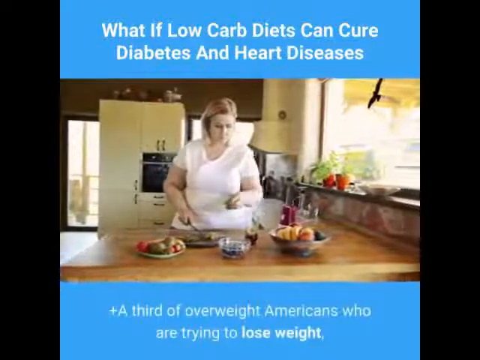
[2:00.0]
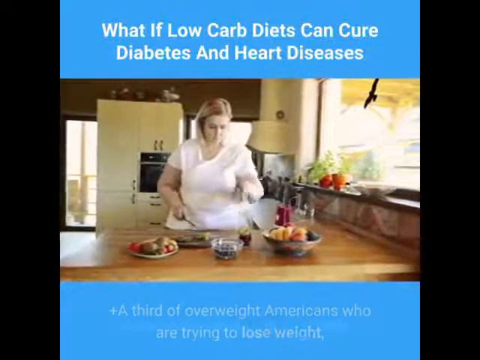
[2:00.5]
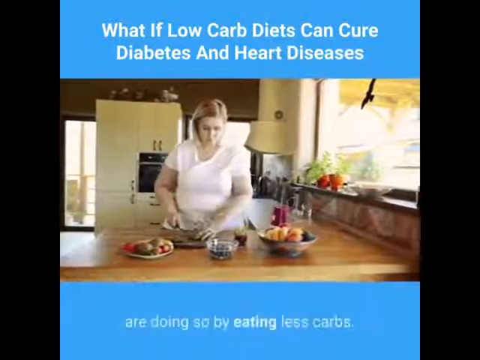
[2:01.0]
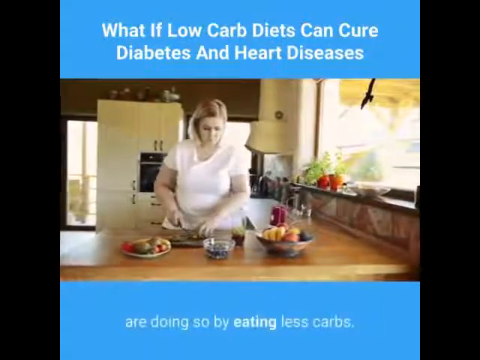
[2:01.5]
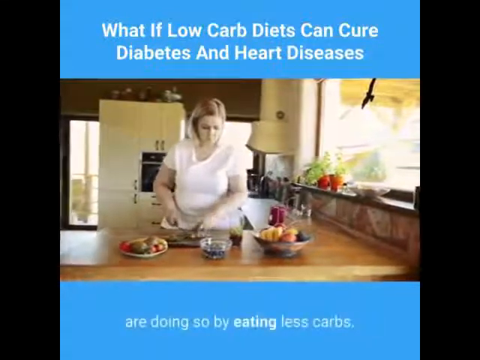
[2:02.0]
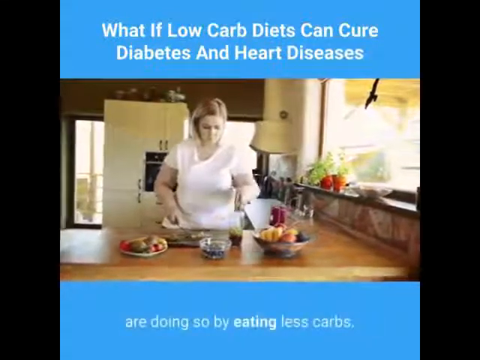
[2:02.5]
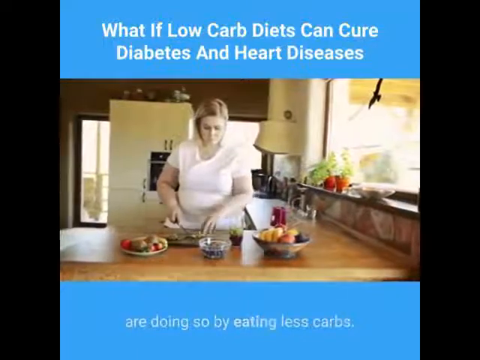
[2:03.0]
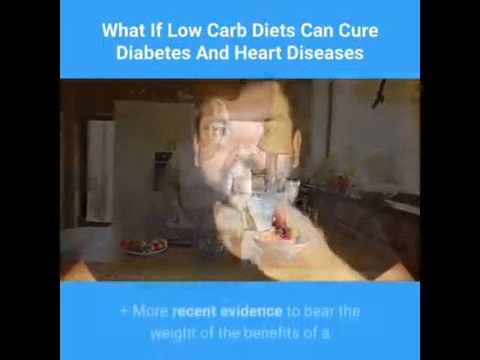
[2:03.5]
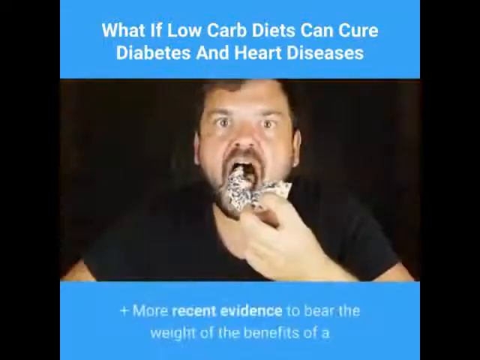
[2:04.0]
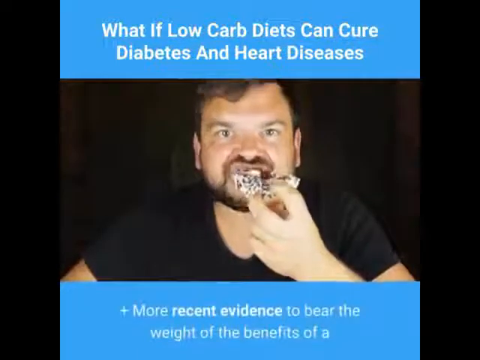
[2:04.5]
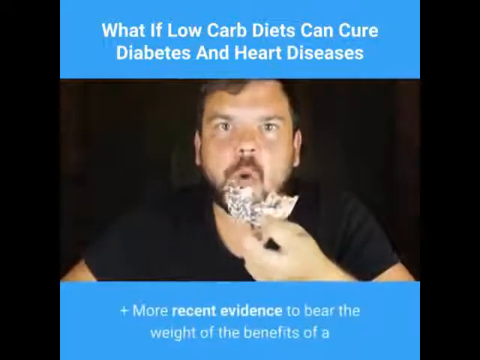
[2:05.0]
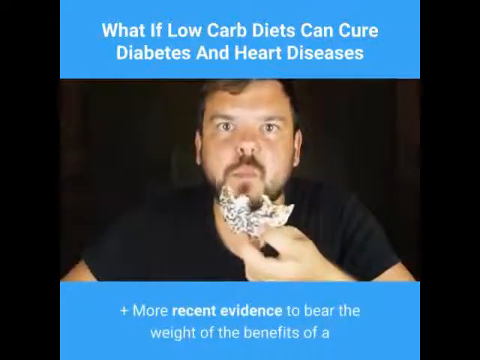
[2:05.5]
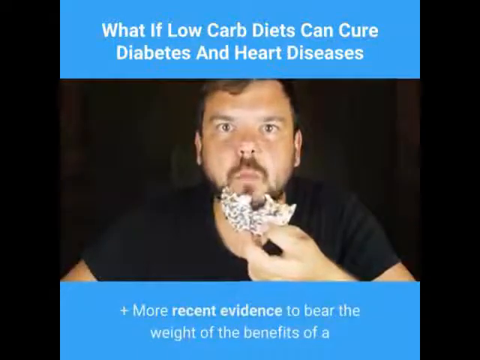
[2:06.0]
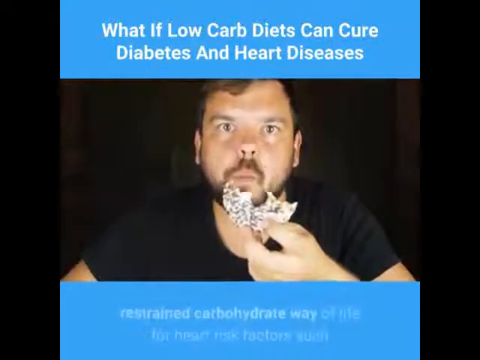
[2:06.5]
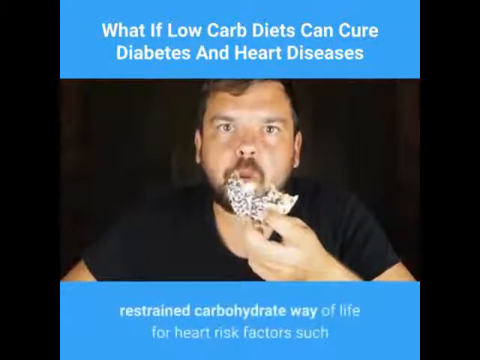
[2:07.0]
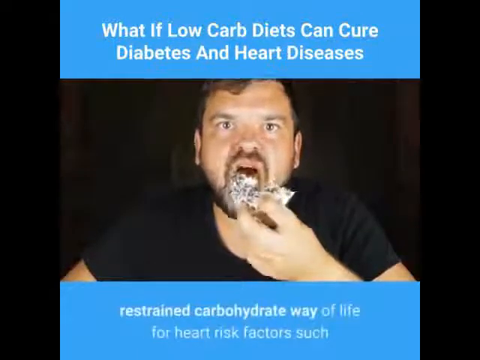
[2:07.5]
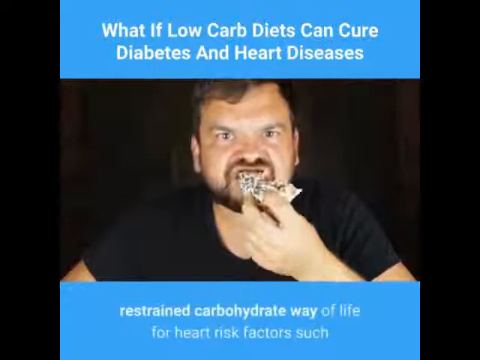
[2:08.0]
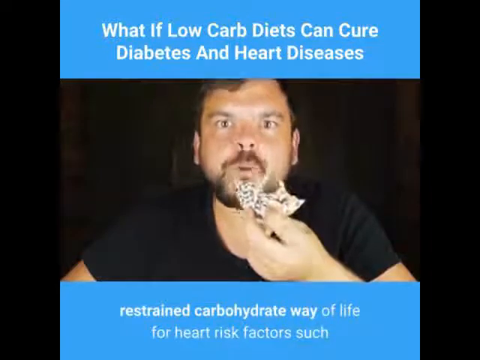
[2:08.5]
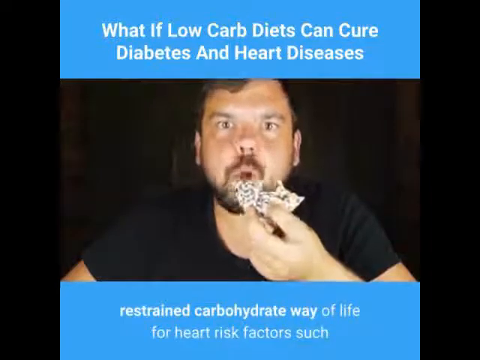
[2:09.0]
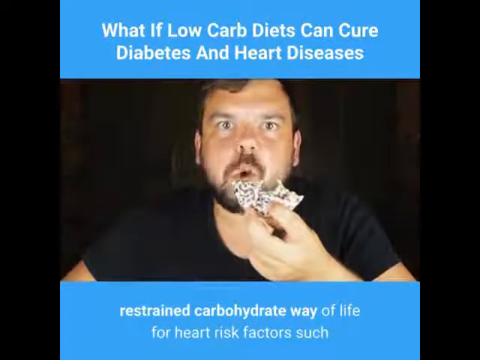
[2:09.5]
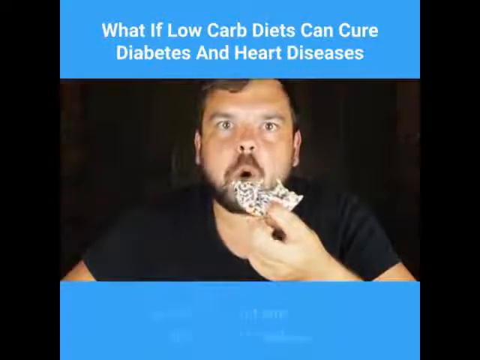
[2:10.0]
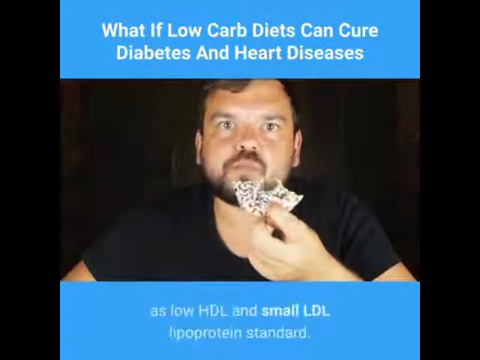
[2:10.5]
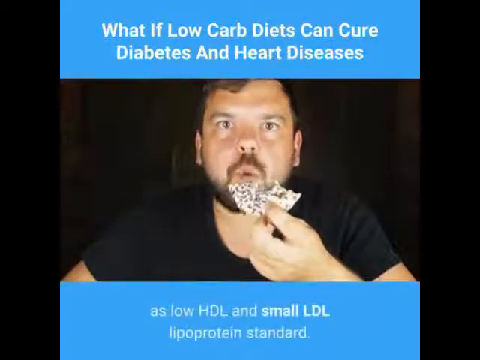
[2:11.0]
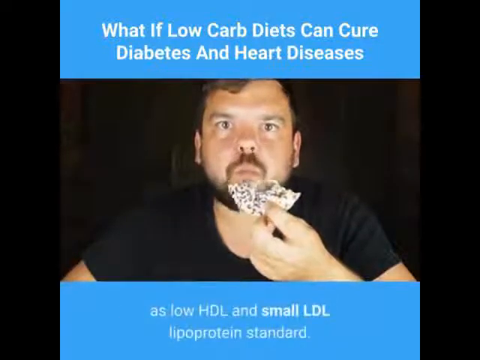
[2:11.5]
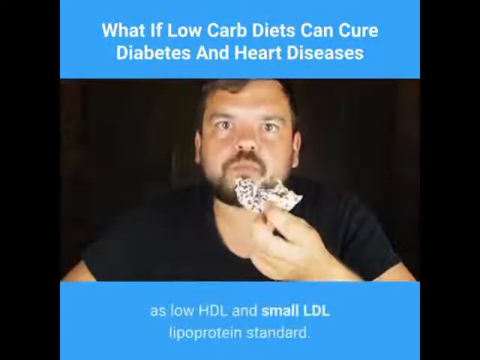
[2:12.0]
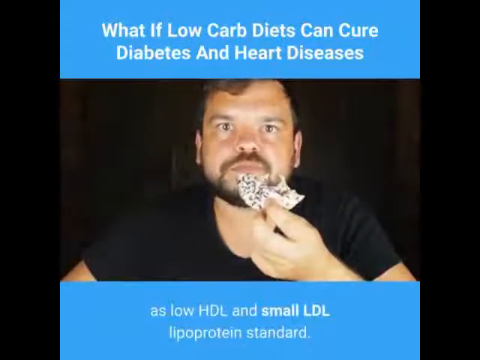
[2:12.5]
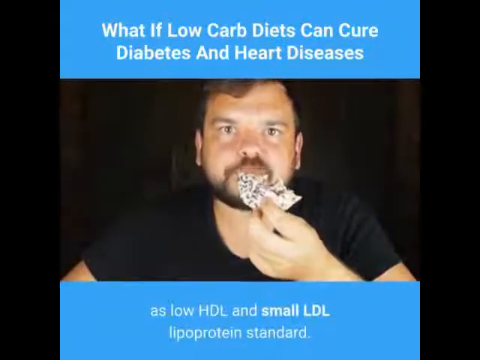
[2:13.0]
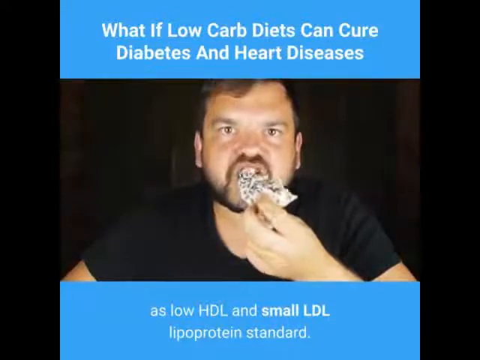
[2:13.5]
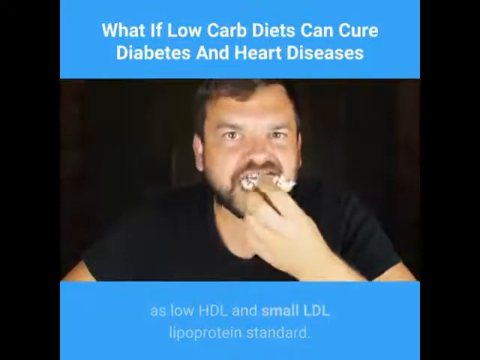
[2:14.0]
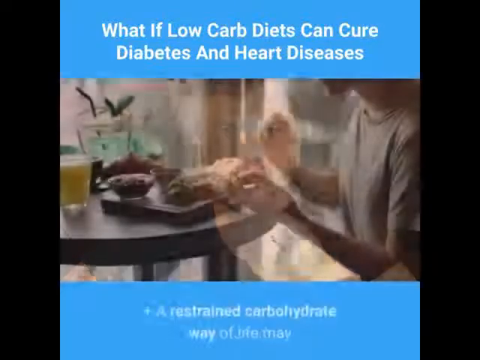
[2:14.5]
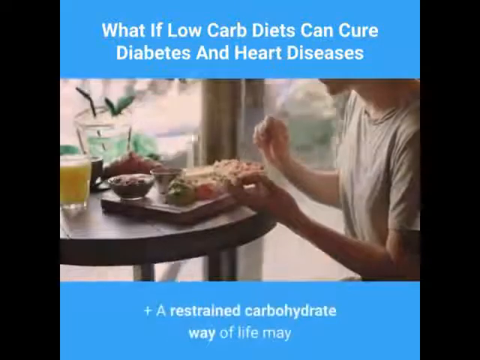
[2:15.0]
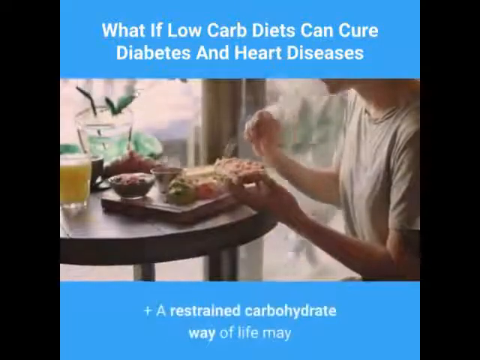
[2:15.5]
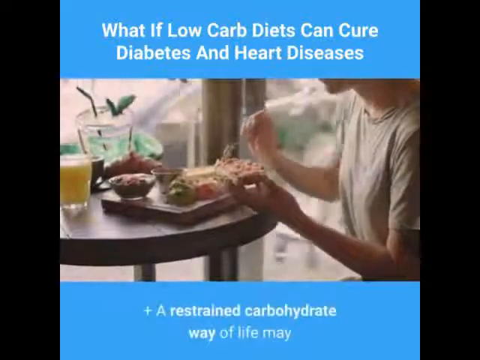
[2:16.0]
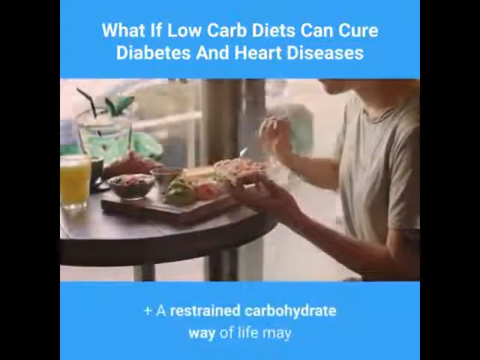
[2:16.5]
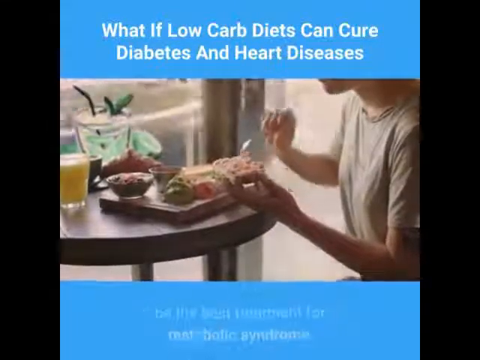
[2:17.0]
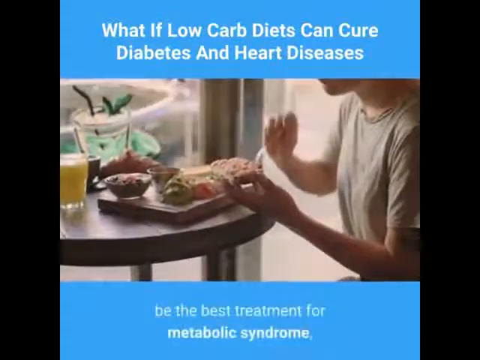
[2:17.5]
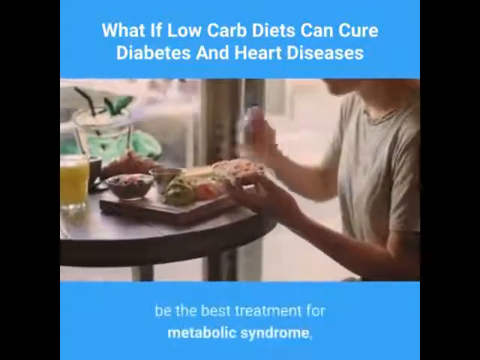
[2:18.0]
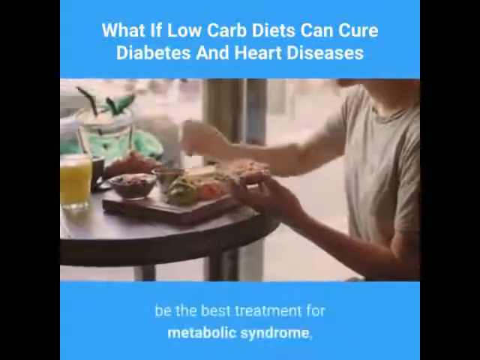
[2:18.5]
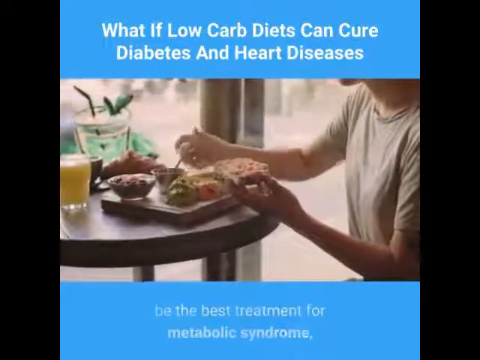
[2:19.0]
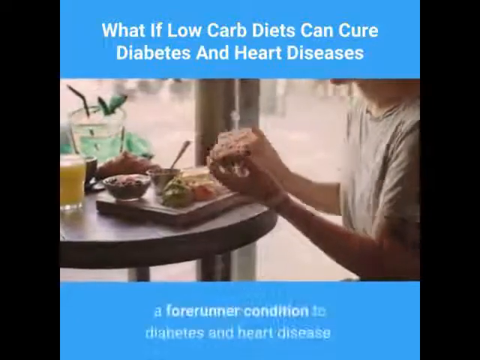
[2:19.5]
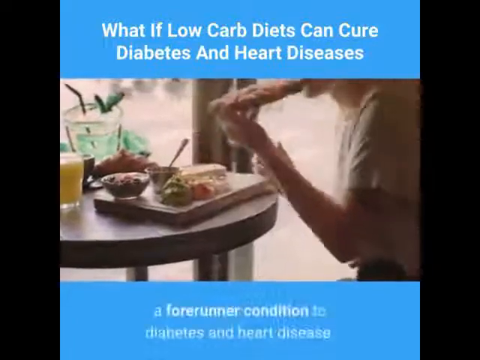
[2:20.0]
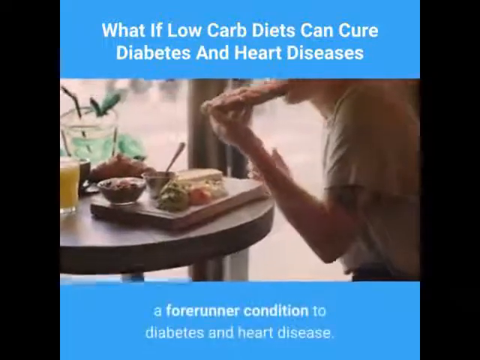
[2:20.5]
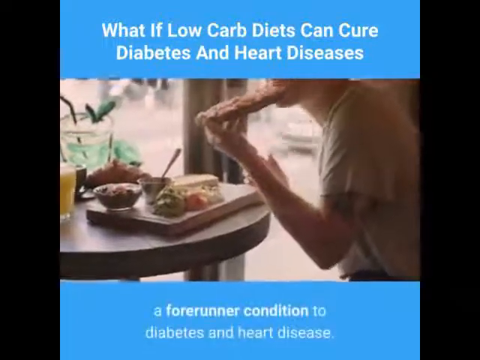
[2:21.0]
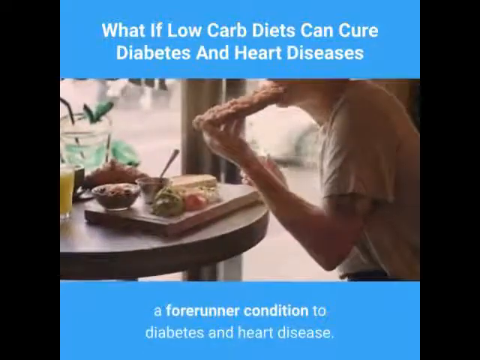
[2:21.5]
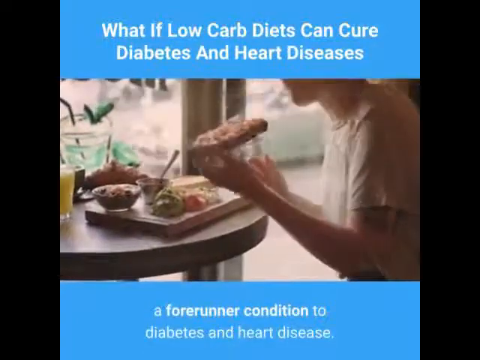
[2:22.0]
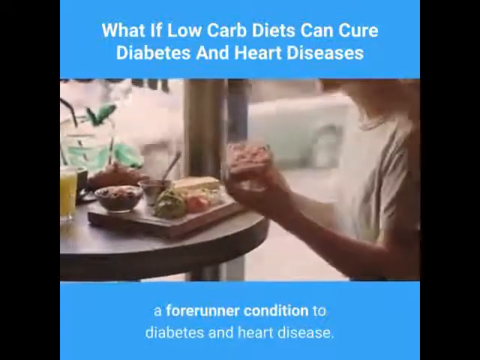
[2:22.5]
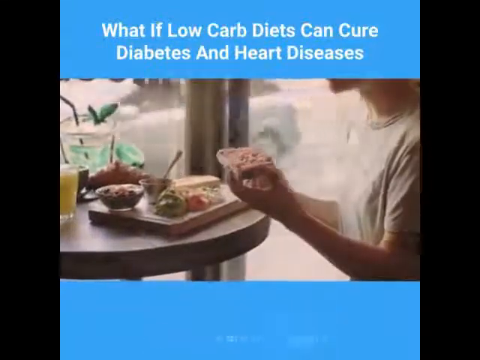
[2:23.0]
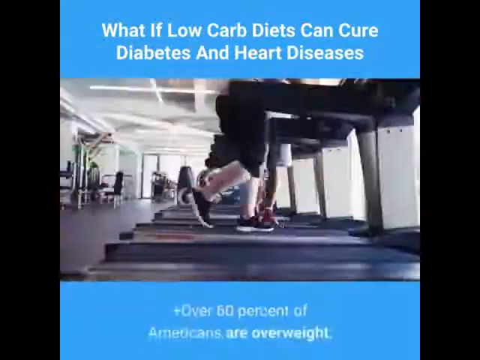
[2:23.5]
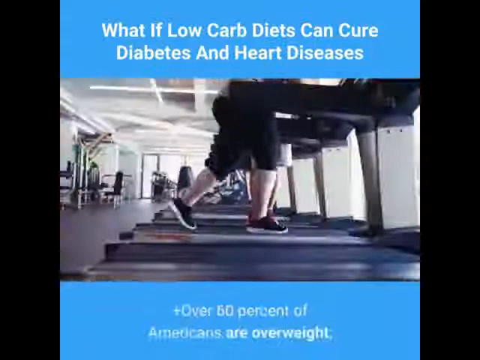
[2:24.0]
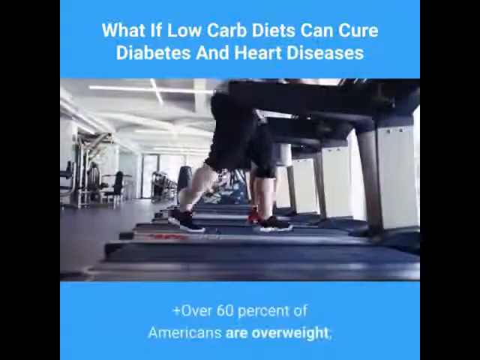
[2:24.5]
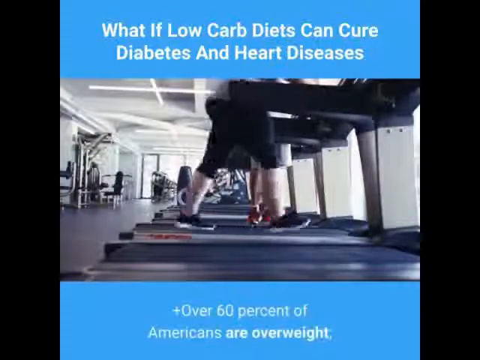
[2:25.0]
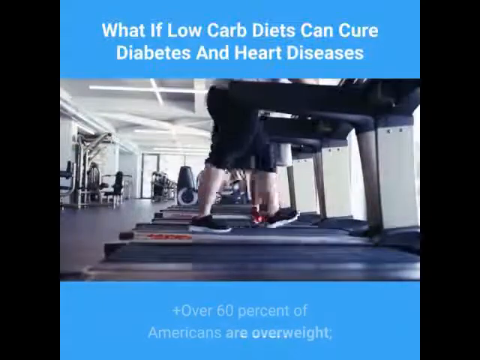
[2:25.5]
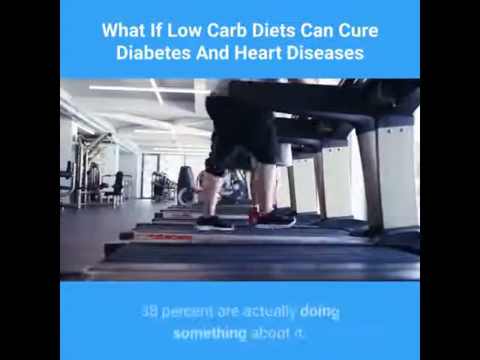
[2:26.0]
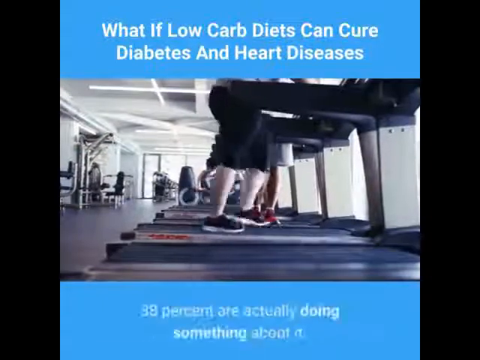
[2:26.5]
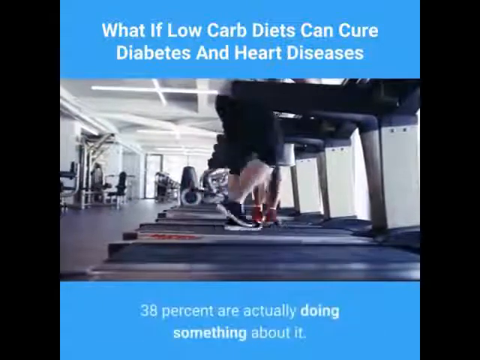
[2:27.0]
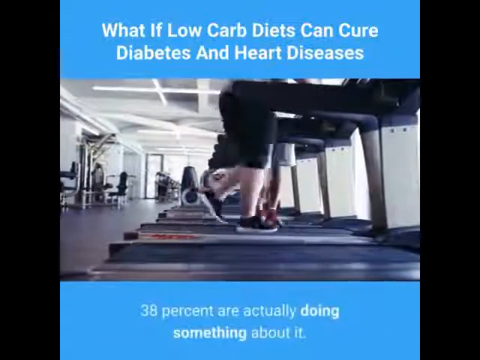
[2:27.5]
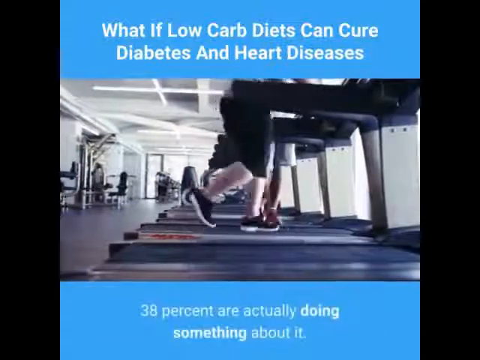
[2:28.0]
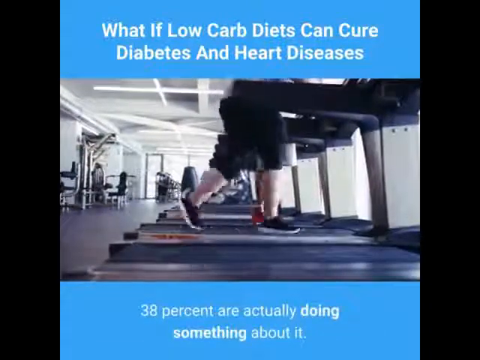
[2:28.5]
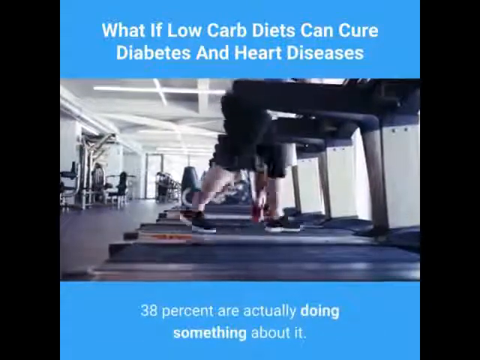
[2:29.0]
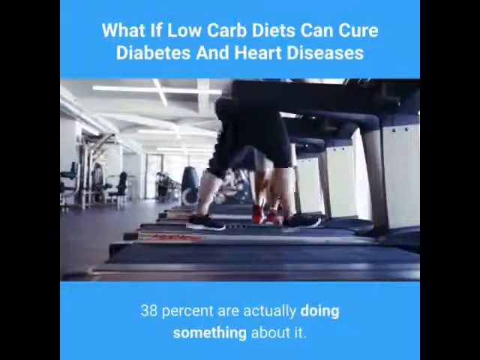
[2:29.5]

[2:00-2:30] The woman prepares a healthy meal with a clear fruit bowl in front of her, throwing ingredients into it, and another plate of vegetables nearby. Cabinets are behind her in the kitchen, plants are on the windowsill, and sunlight comes in. She keeps chopping and puts what she cuts into the glass bowl. A man eats a bagel that looks like it has cream cheese or something on it. Text reads "restrain carbohydrates. They add to heart disease." Another woman adds healthy ingredients to a flat piece of bread. Text reads "over 60 percent of people are overweight". An overweight person walks steadily on a treadmill, with only their legs visible.